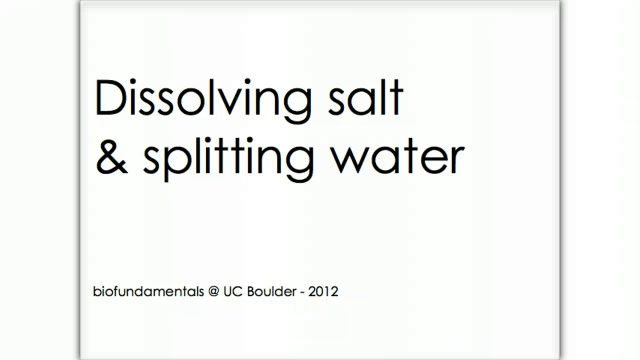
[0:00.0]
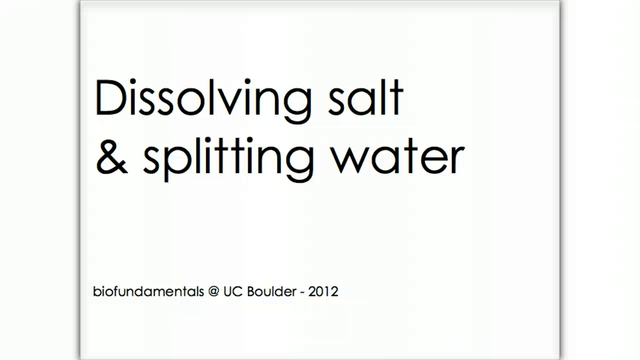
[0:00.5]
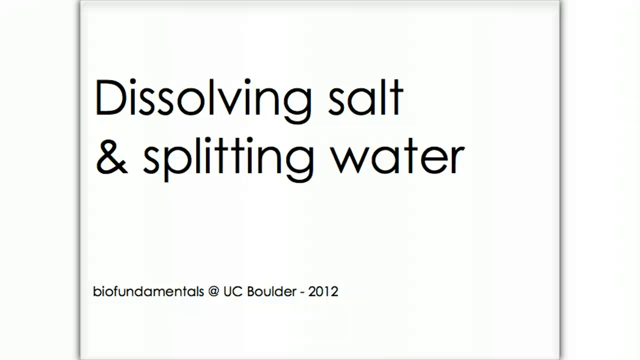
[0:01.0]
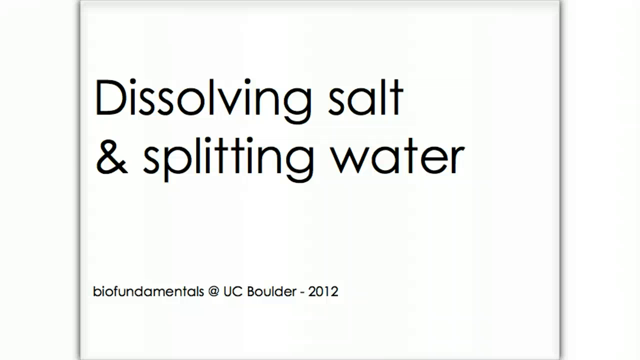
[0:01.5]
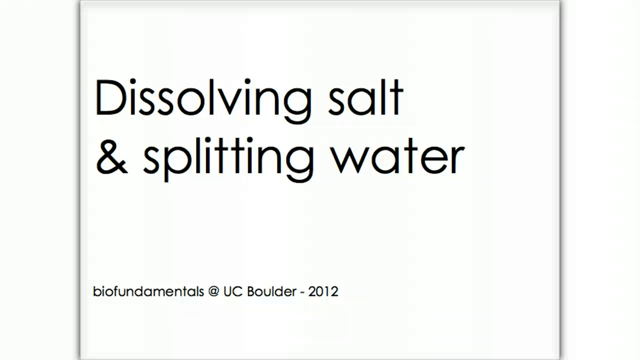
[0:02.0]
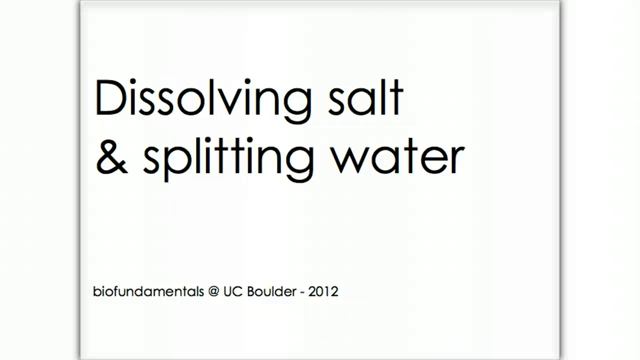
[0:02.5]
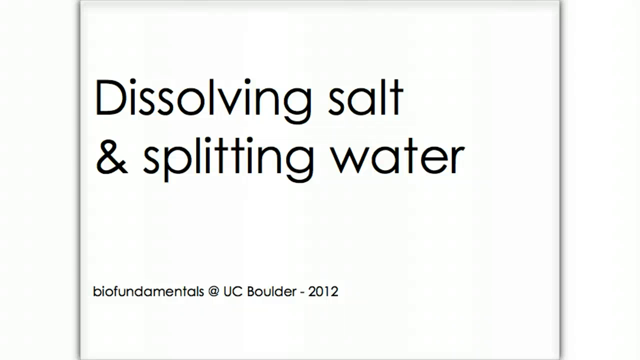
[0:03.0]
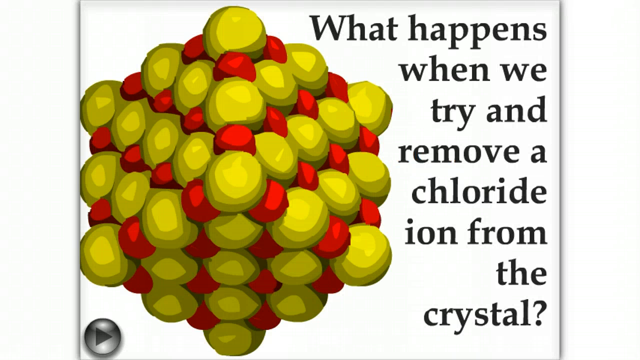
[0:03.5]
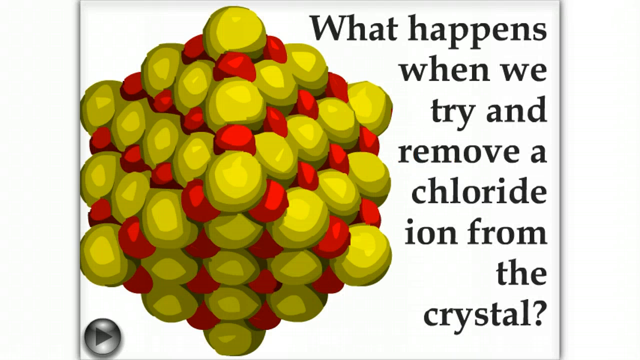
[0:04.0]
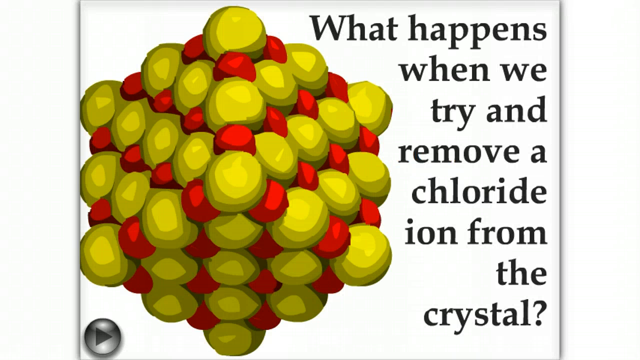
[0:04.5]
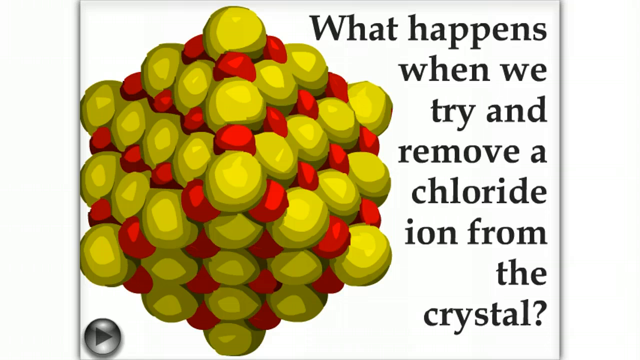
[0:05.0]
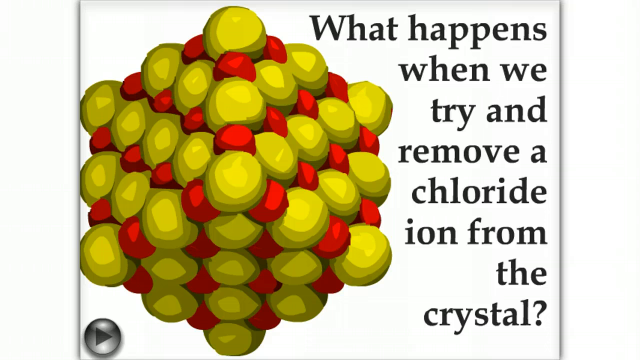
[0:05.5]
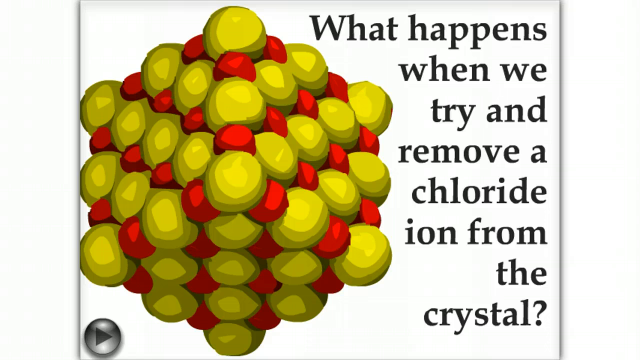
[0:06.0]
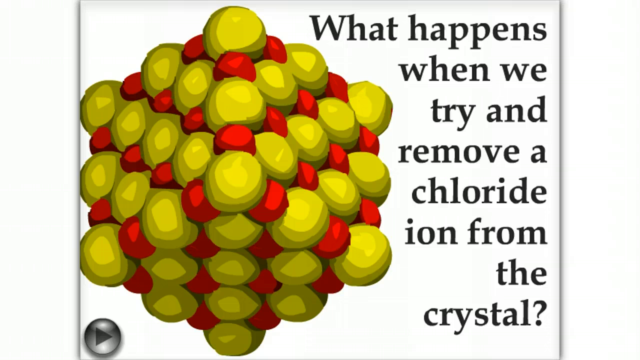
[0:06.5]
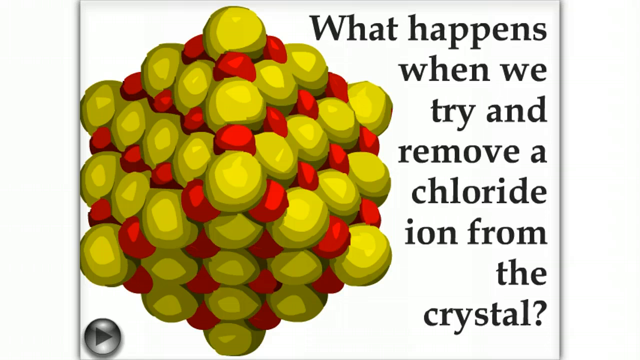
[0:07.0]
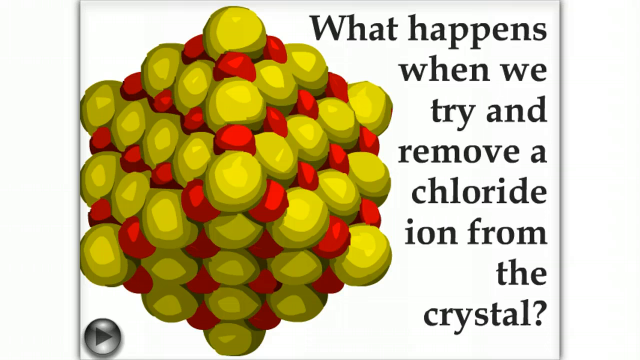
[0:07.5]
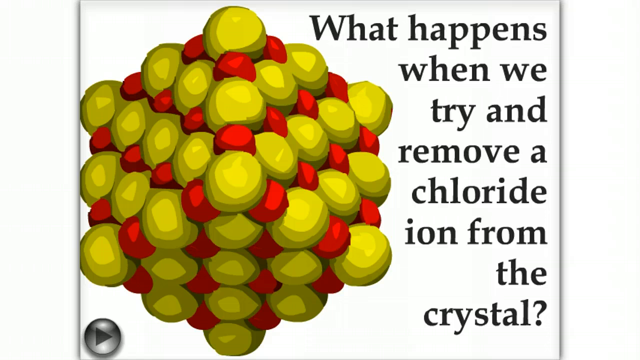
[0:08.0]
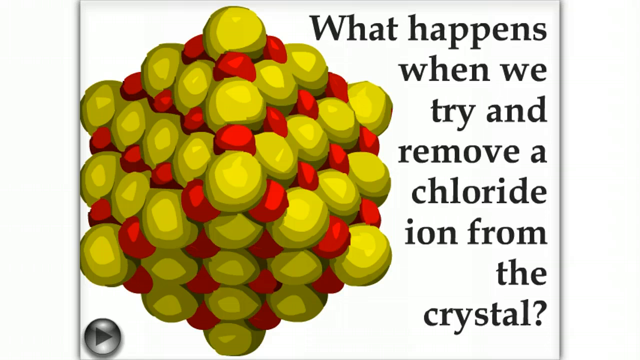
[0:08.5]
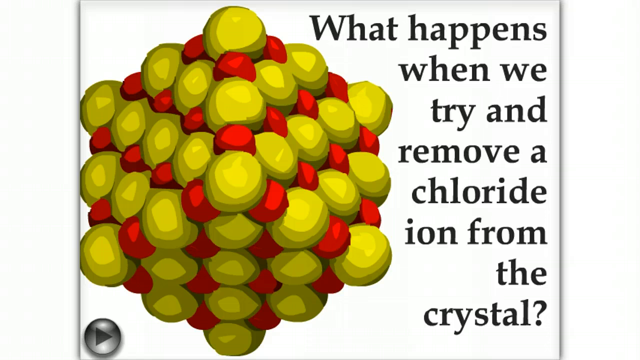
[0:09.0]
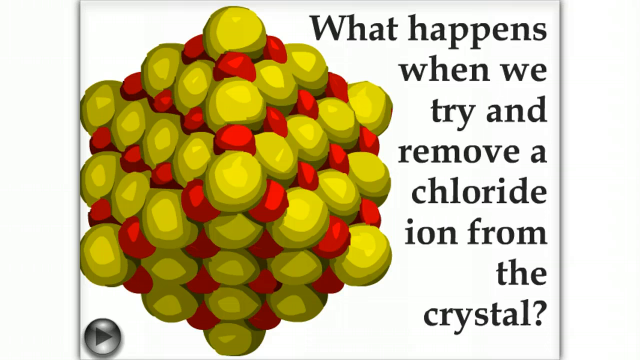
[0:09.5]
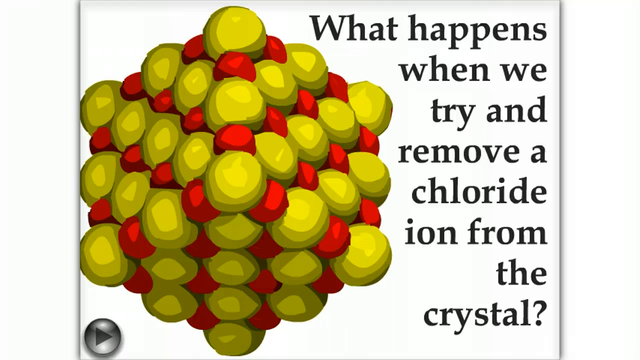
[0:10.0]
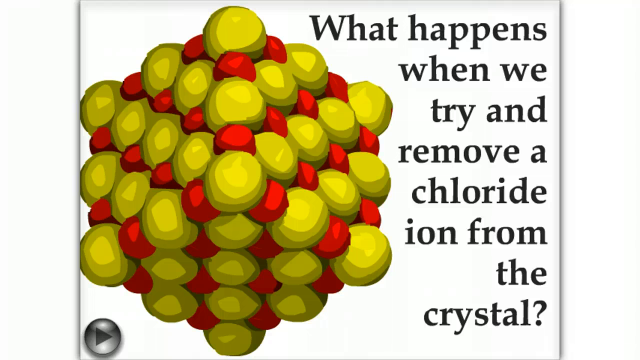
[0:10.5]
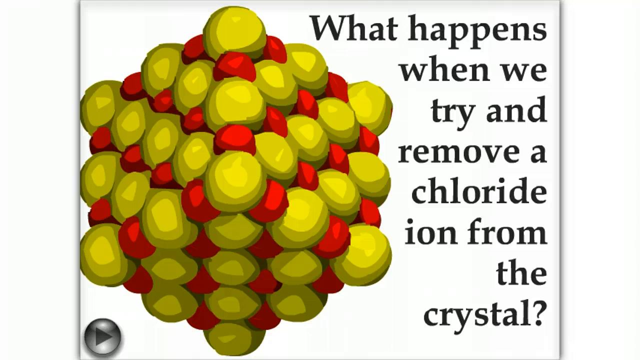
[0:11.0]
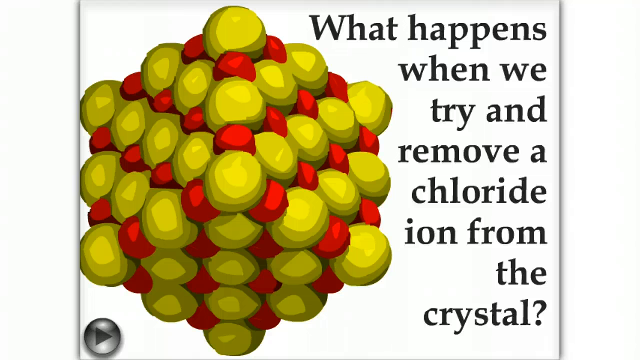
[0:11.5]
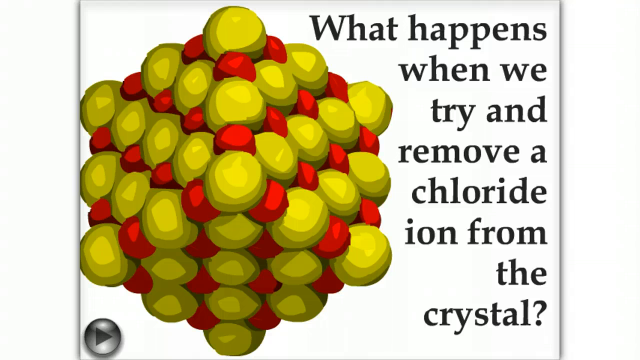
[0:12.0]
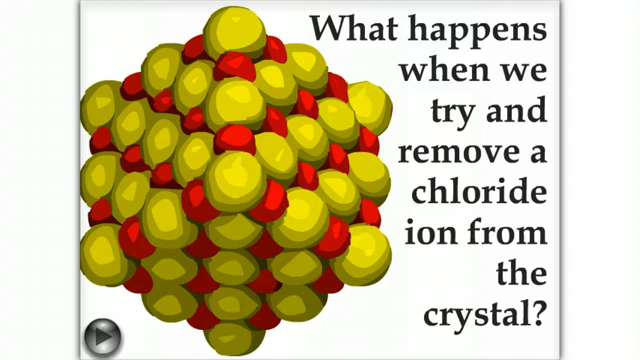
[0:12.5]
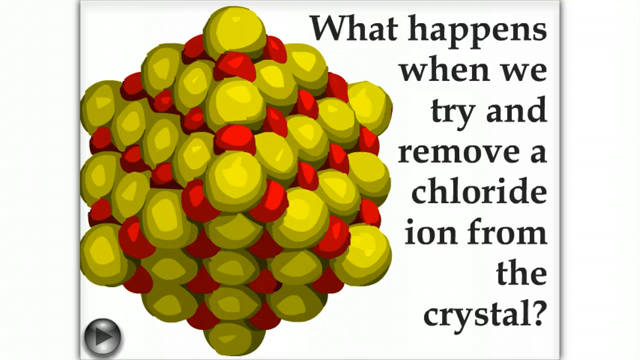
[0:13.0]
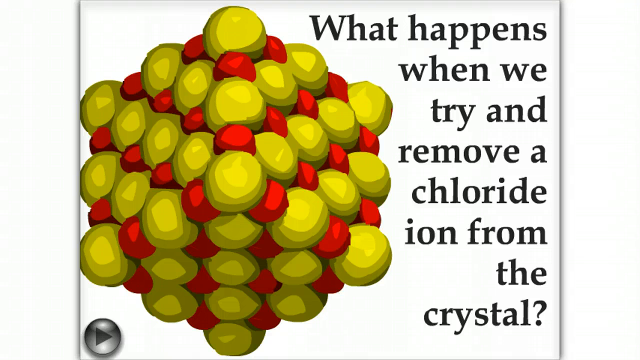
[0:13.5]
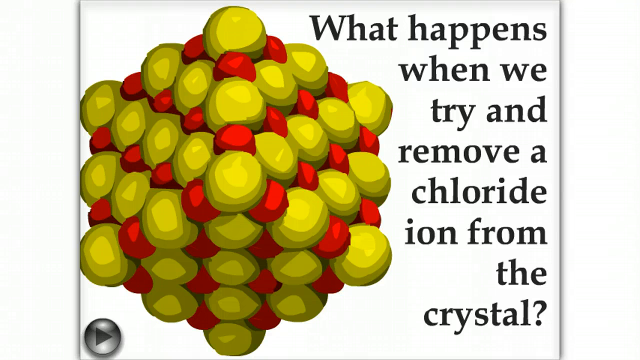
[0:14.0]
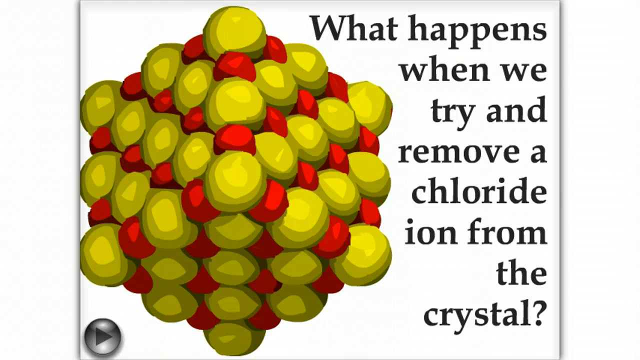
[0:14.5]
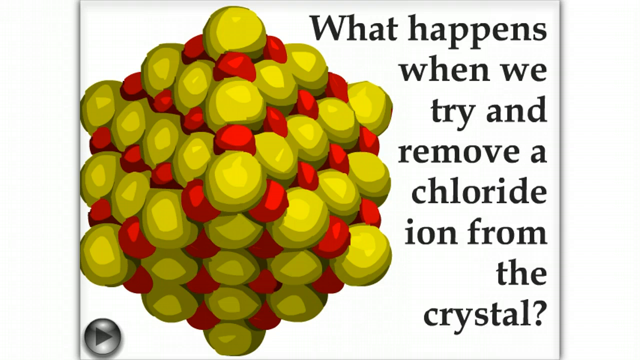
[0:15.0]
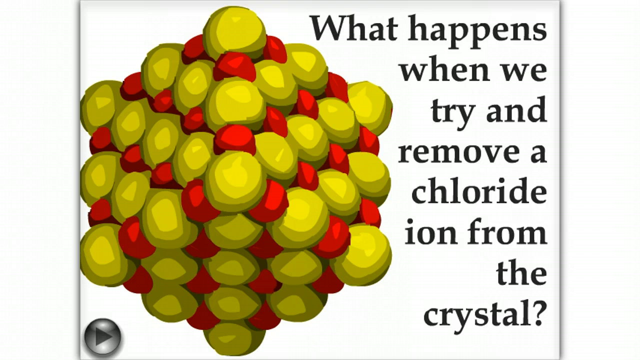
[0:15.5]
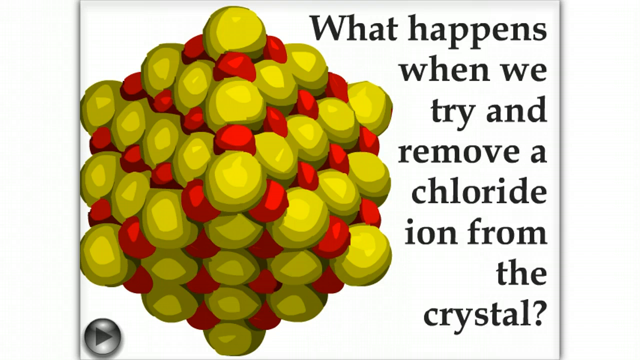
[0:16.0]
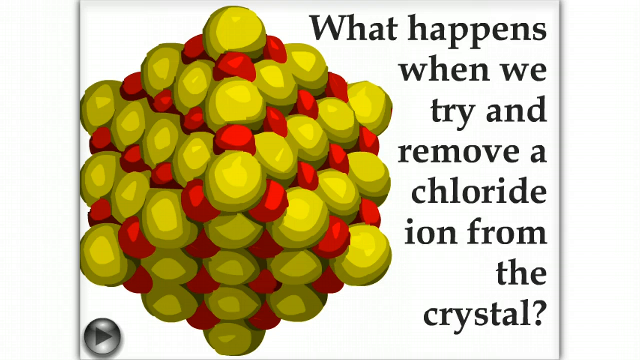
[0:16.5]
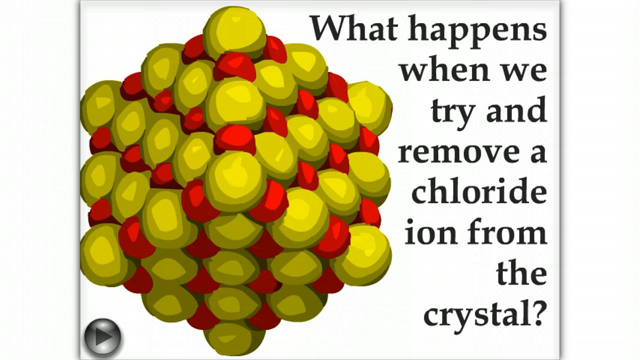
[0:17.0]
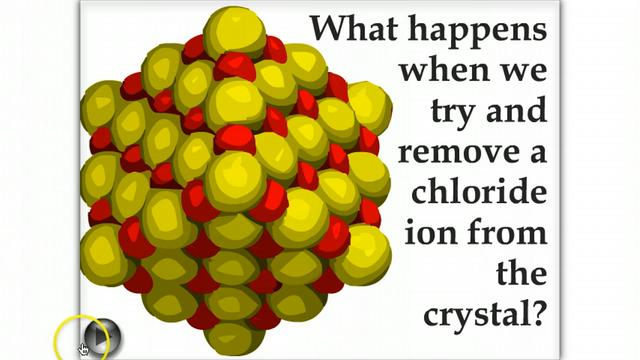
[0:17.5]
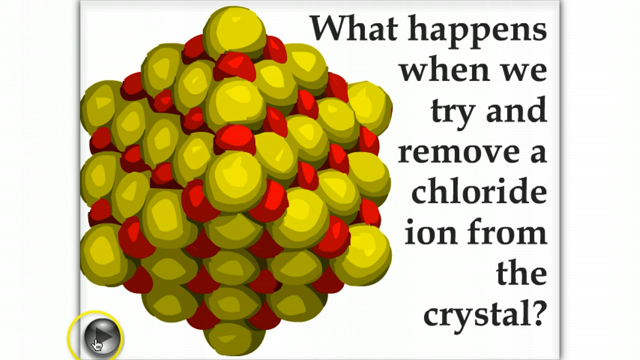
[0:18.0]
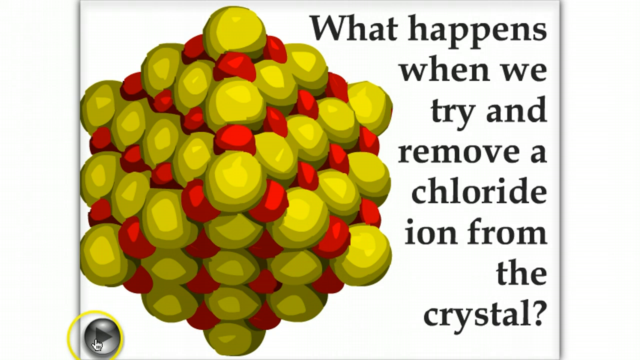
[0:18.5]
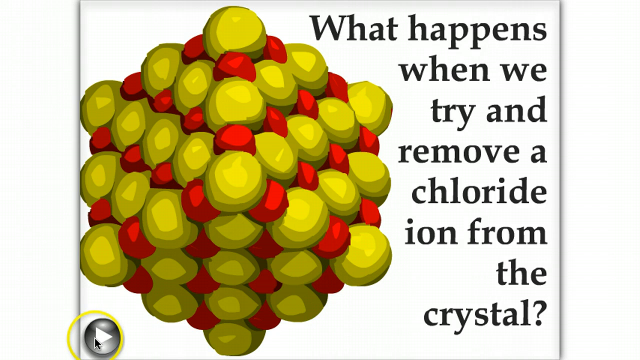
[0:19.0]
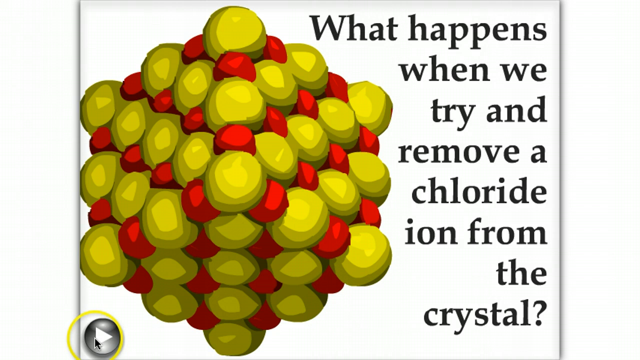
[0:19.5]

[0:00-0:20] A black title on a white background reads "Dissolving Salt and Splitting Water, BioFundamentals at UC Boulder 2012." The slide changes to a scientific drawing of yellow and red molecules, accompanied on the right-hand side by the black-text title "What Happens When We Try and Remove a Chloride Ion from the Crystal." The slide then advances and the text on the right-hand side disappears from the screen. It appears to be a chemistry video from the course BioFundamentals at the University of Colorado Boulder in 2012. The white background, with minimal text and images, gives a minimalistic look, and there is a clear white border on the left and right sides of the video.